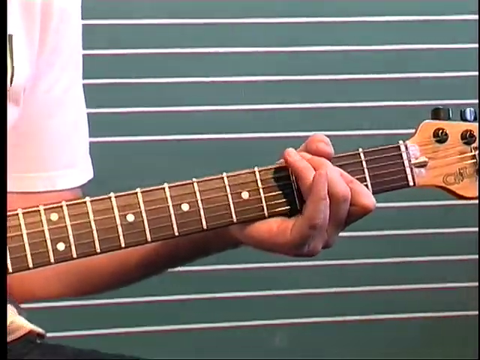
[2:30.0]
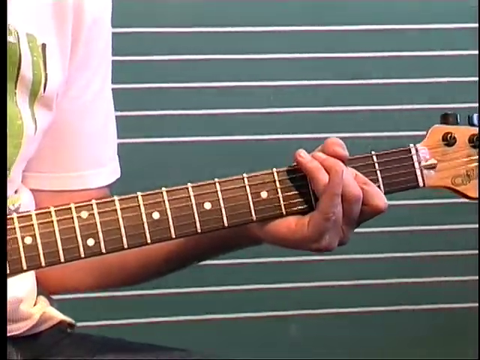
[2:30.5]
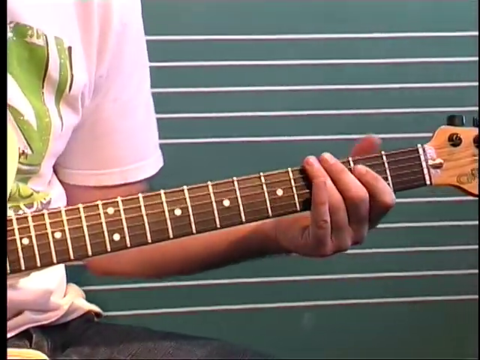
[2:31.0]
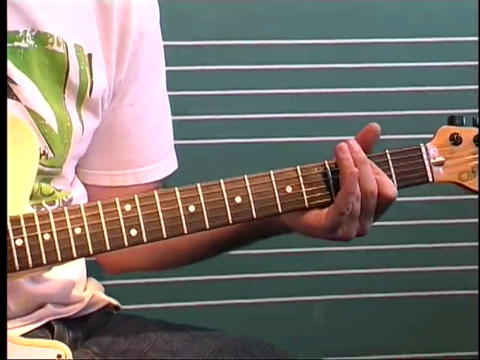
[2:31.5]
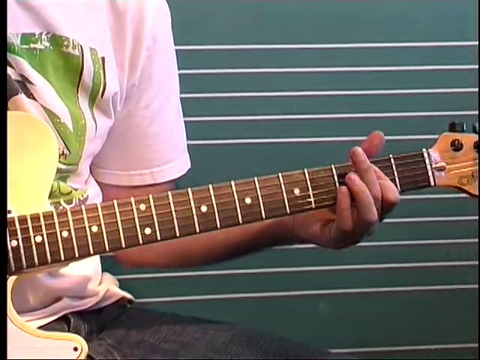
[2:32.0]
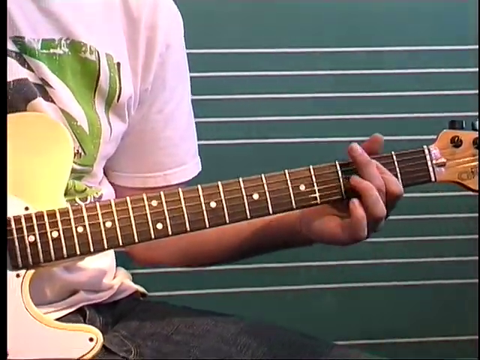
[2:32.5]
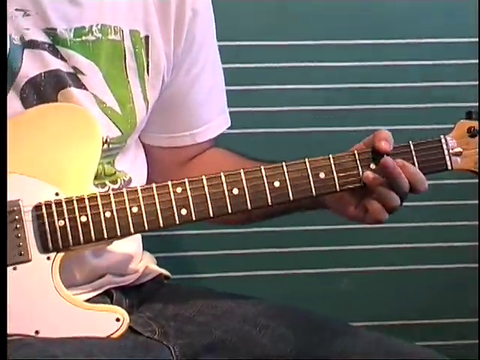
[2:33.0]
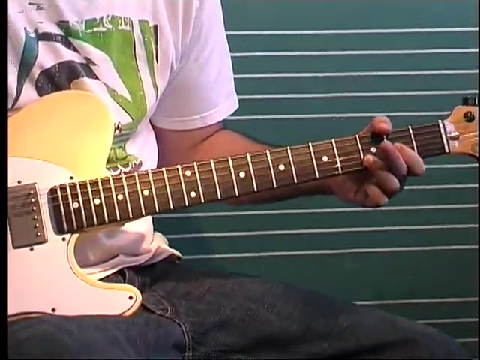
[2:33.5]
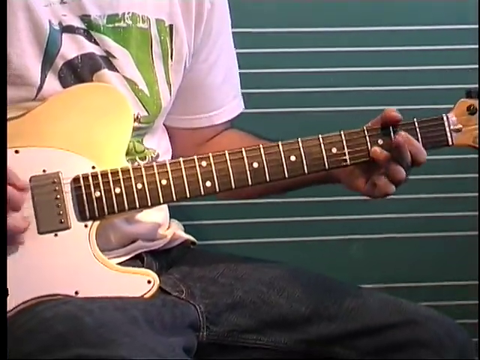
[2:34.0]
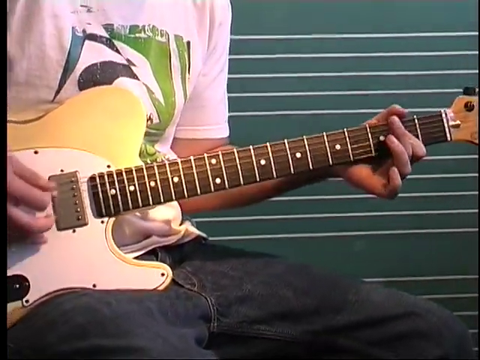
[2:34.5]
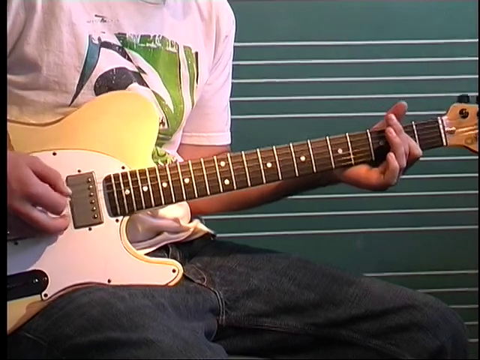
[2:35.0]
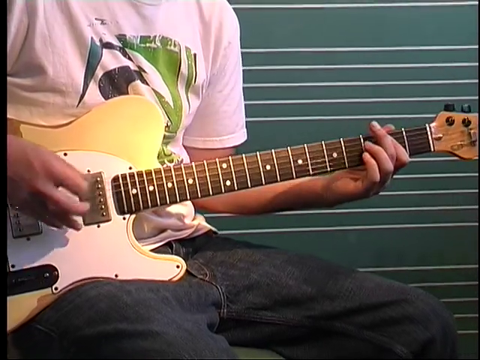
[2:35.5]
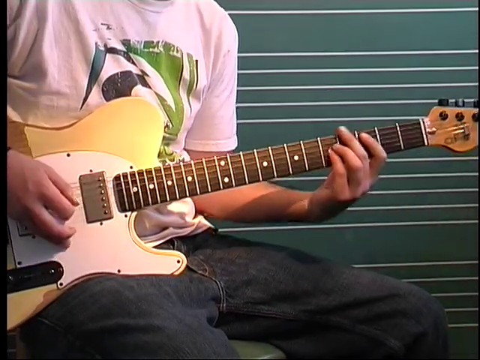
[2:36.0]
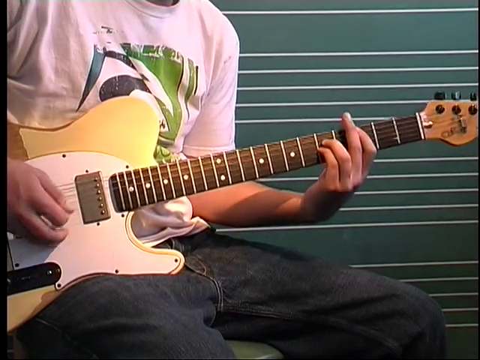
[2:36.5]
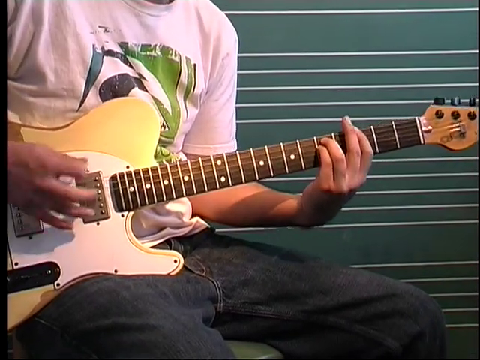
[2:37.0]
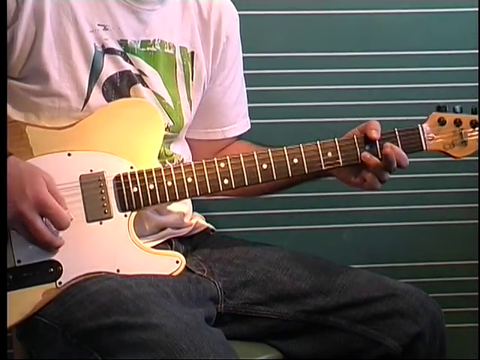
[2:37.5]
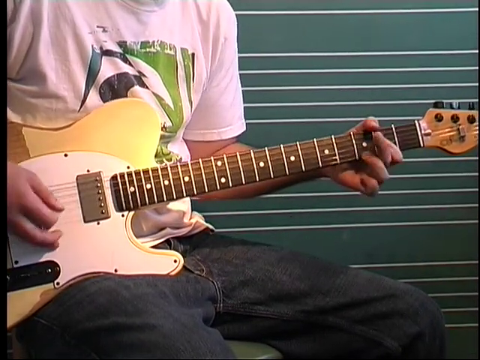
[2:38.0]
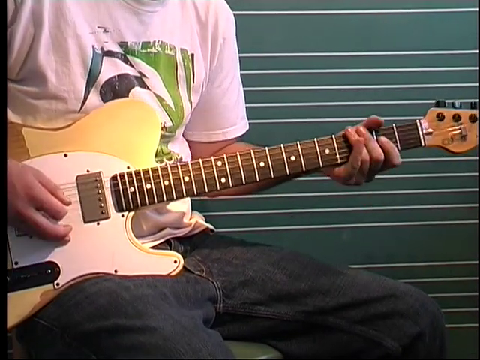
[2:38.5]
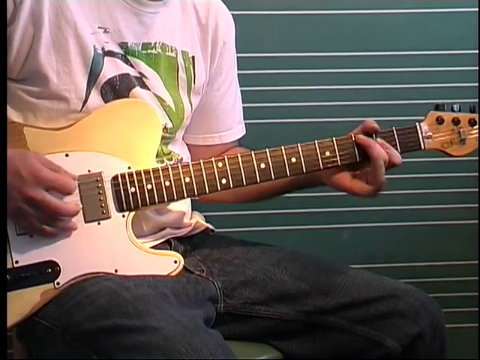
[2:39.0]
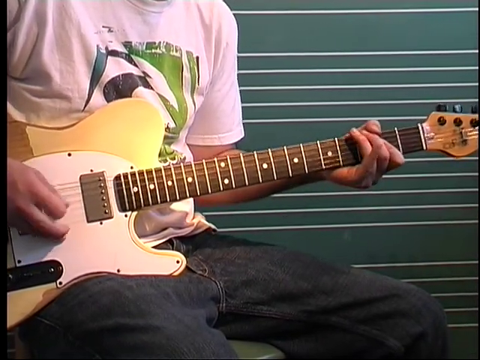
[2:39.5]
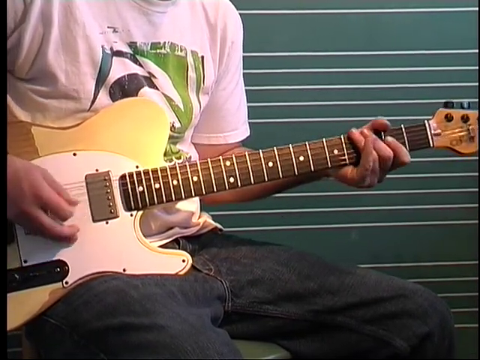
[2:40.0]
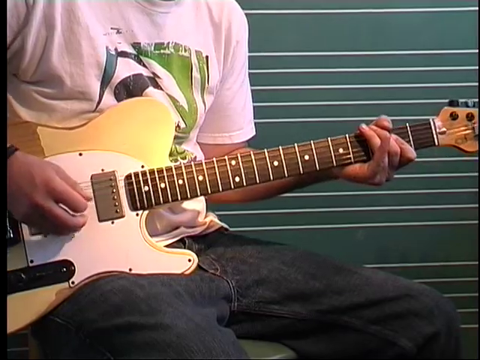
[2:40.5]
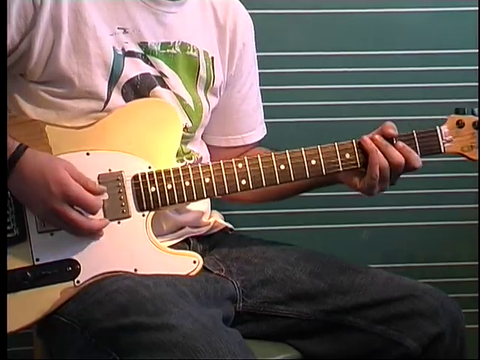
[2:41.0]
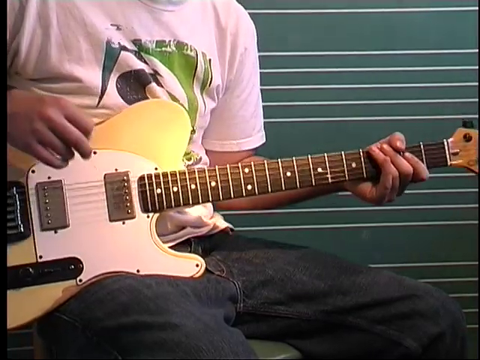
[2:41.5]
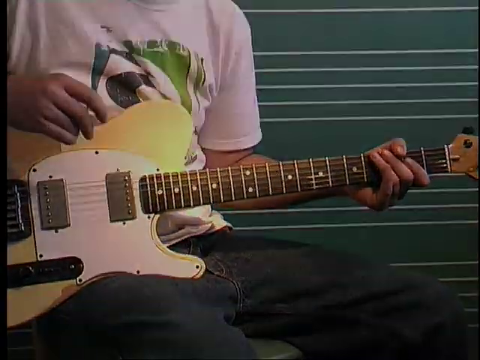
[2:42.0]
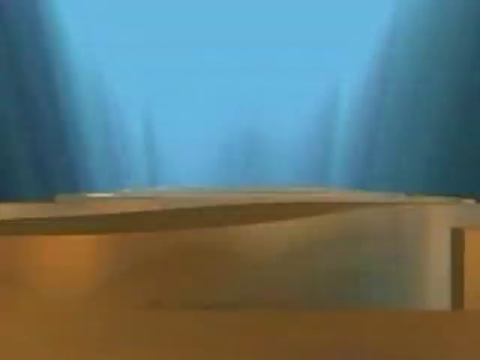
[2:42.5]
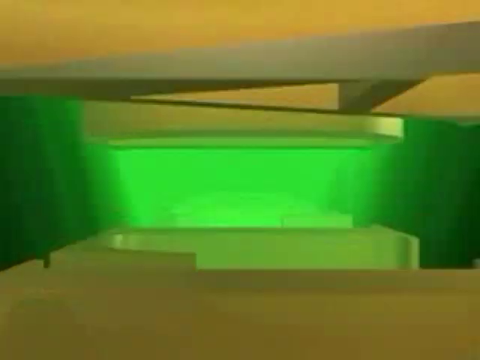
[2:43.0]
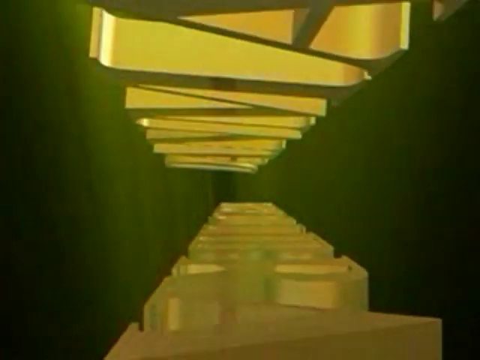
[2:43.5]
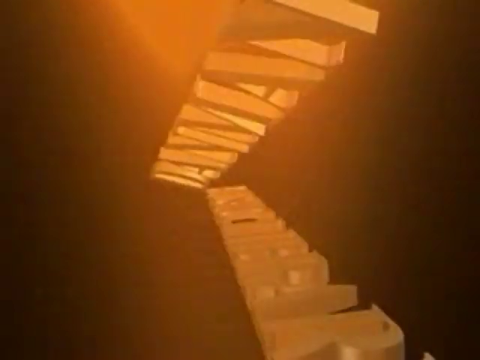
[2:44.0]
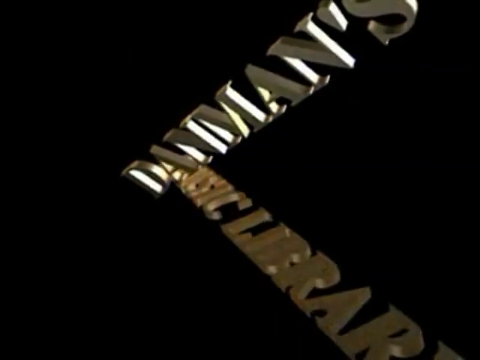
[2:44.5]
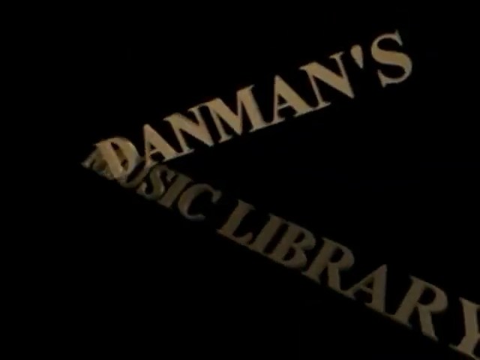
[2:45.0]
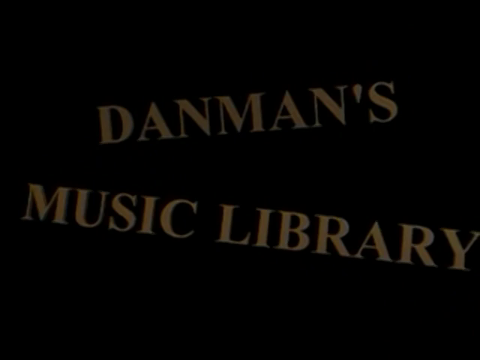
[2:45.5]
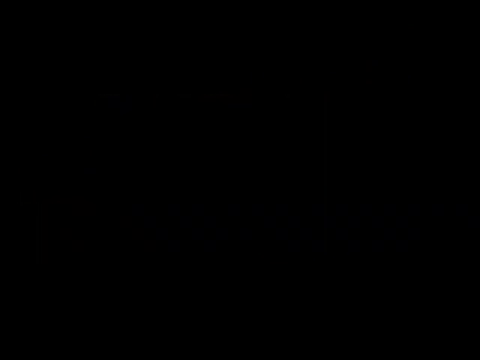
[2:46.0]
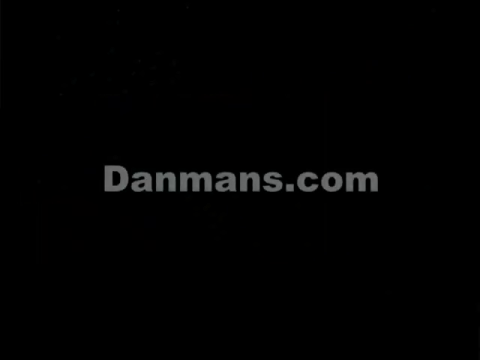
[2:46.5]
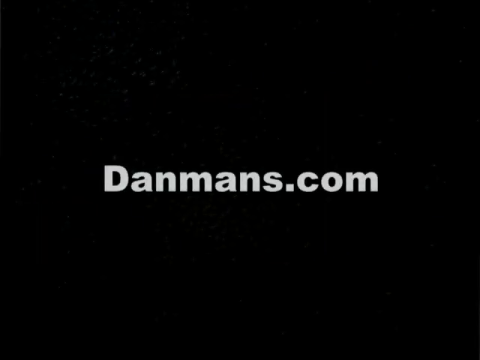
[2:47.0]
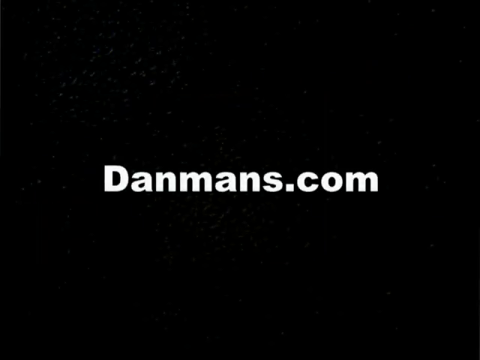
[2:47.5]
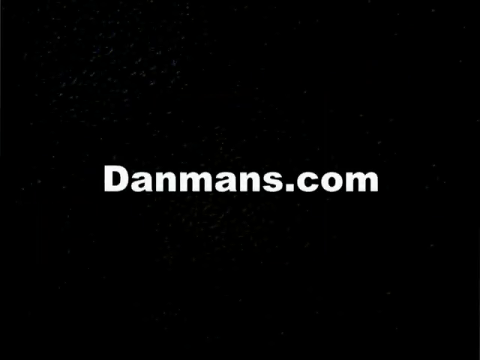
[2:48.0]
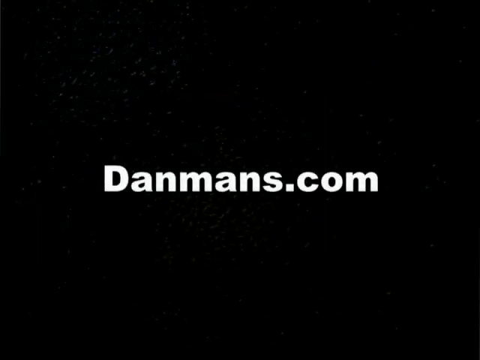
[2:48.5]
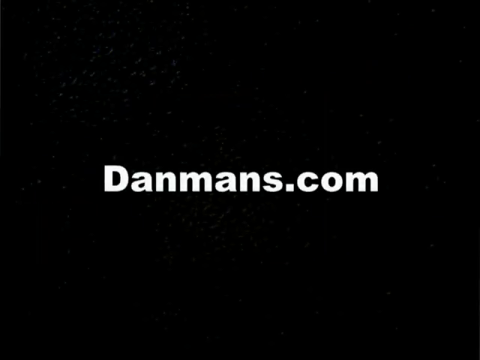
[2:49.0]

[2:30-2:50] A close-up shows a man's left hand playing different strings on the neck of an electric guitar. The camera backs out somewhat and pans left a little, revealing the yellow and white body of the guitar, with the man's right arm strumming over the body while his left-hand fingers press different notes up and down the neck. He wears a short-sleeved white shirt with some kind of green and blue wavy line graphic and dark blue jeans. Behind him is a green chalkboard with white lines across it like those in sheet music. A transition screen follows with bright green, yellow and blue lights, then the words "DanMan's Music Library" appear. Finally, a black screen shows "danmans.com" in white font in the middle.